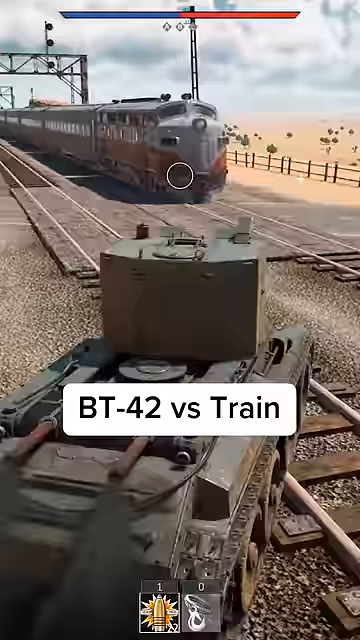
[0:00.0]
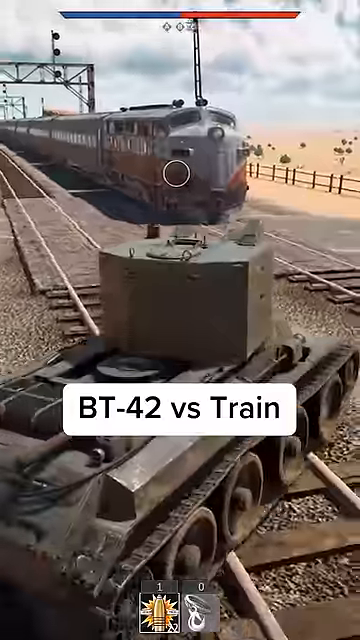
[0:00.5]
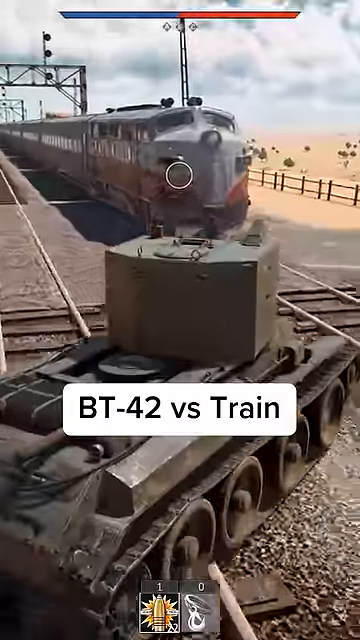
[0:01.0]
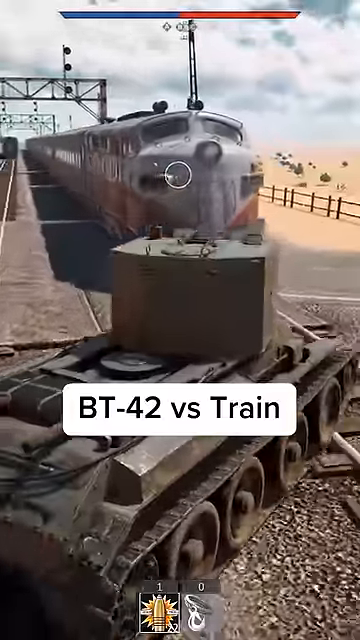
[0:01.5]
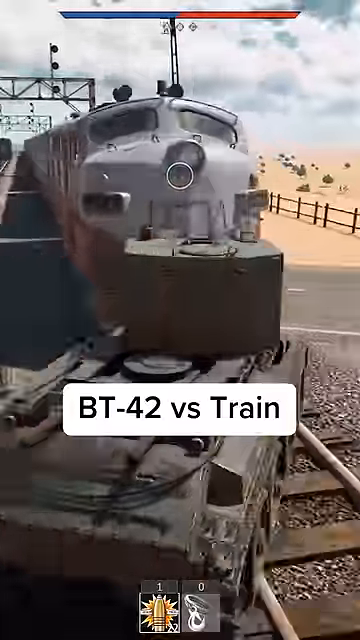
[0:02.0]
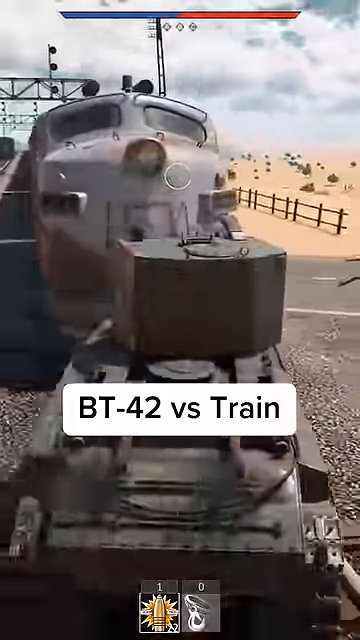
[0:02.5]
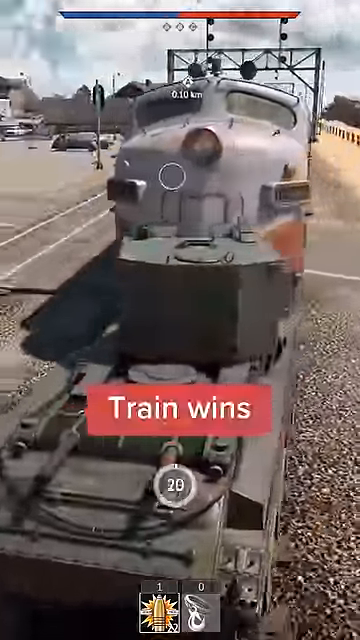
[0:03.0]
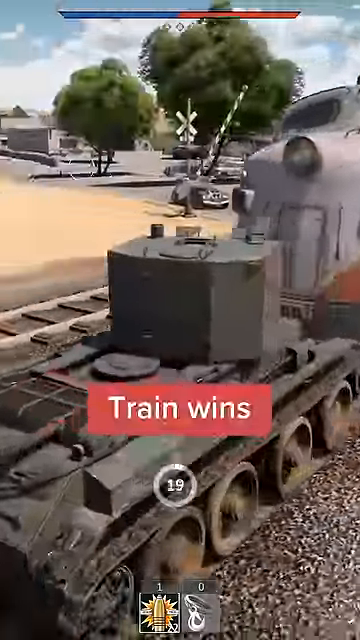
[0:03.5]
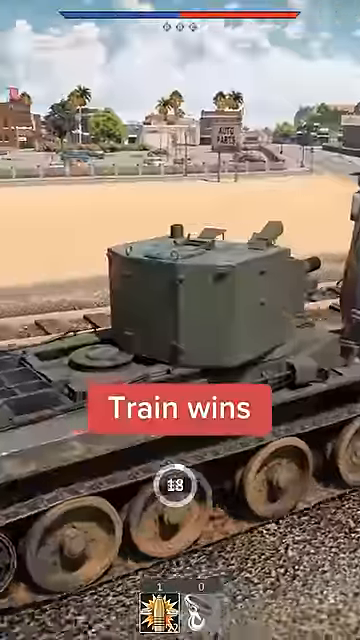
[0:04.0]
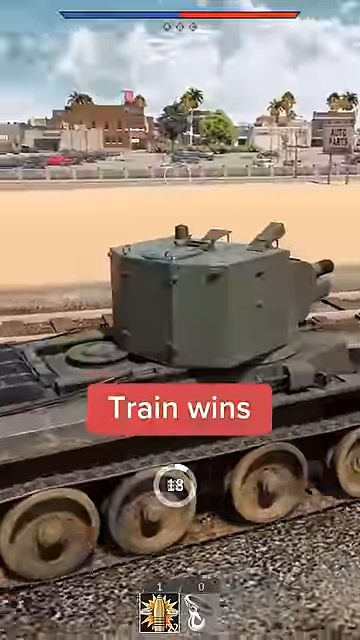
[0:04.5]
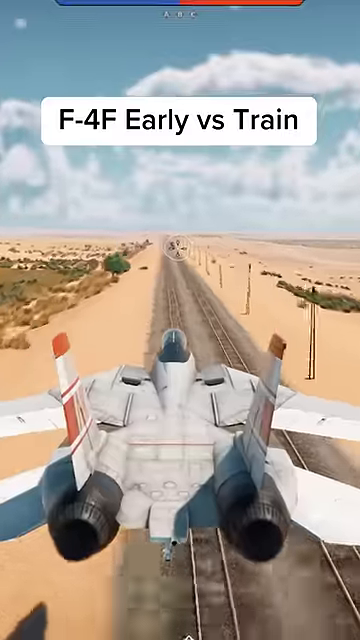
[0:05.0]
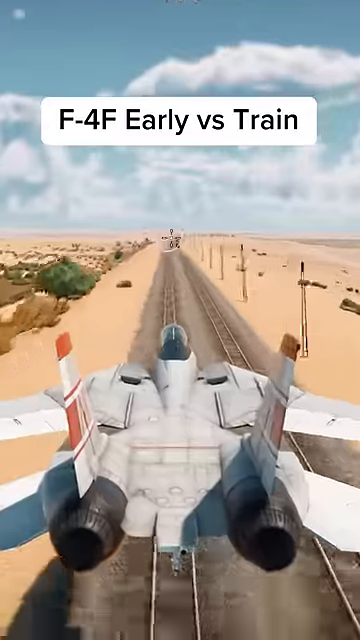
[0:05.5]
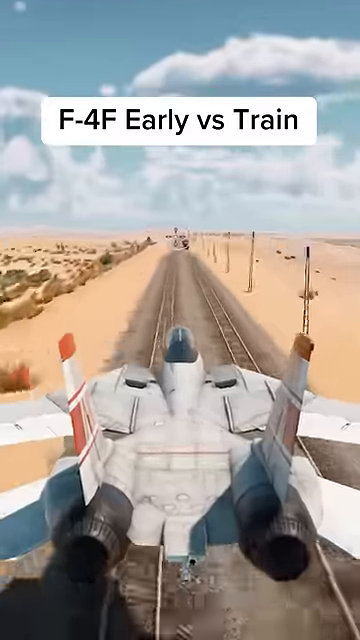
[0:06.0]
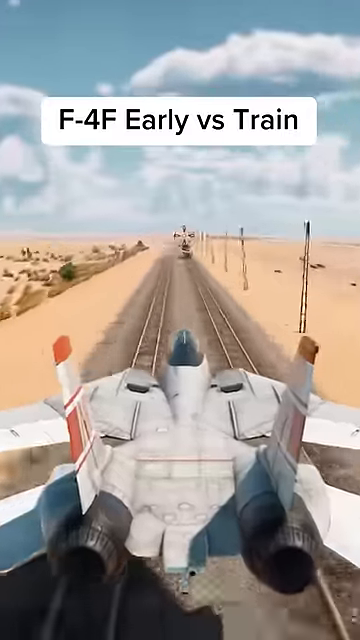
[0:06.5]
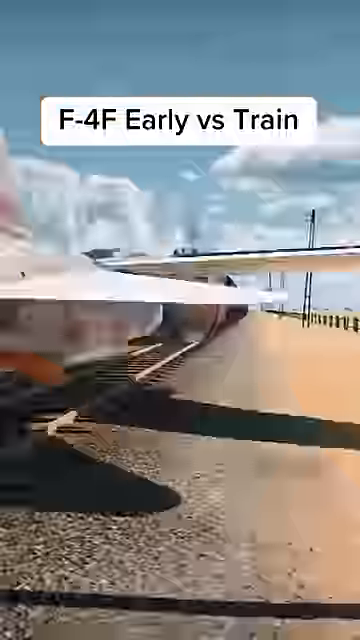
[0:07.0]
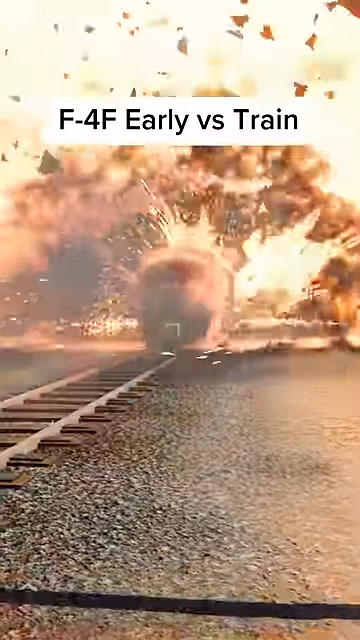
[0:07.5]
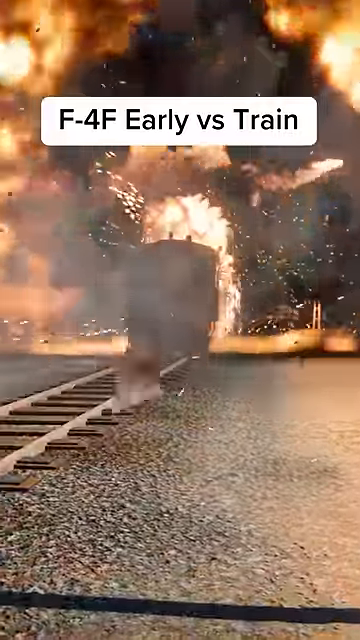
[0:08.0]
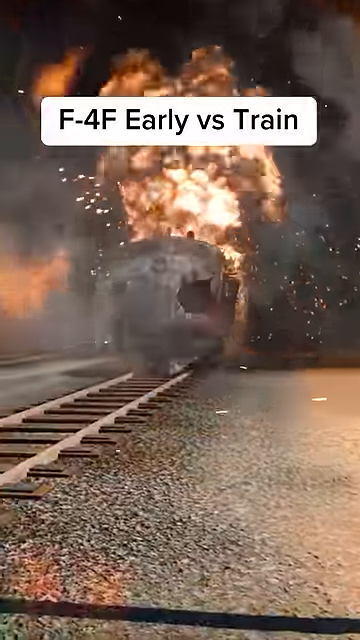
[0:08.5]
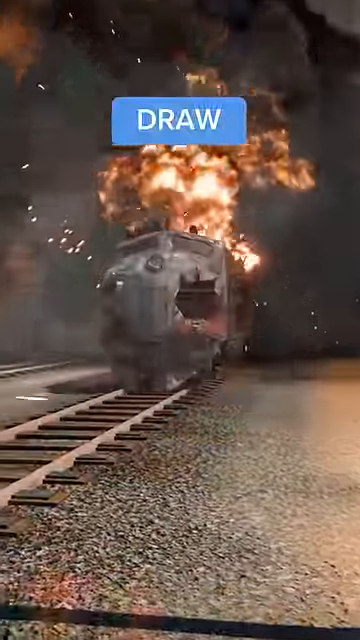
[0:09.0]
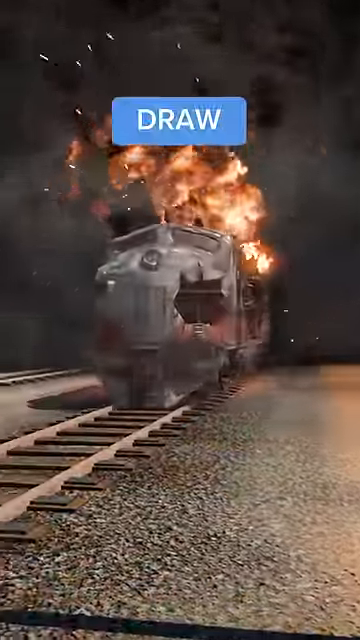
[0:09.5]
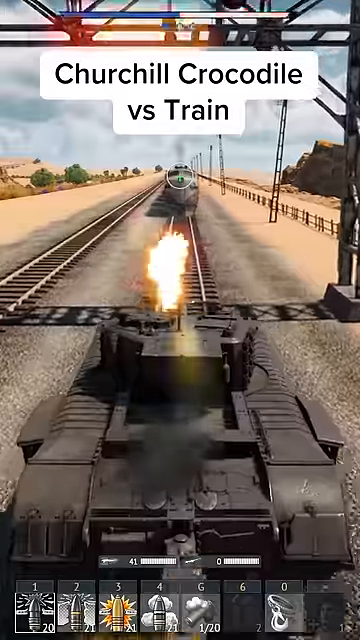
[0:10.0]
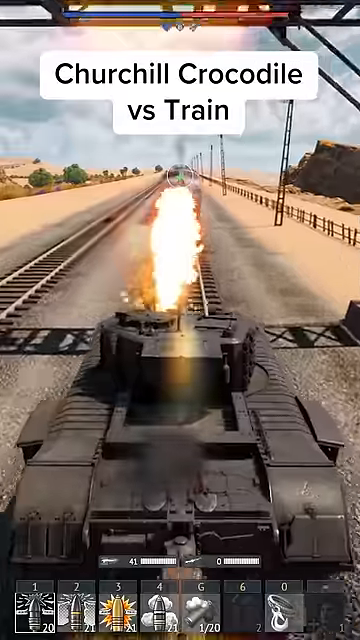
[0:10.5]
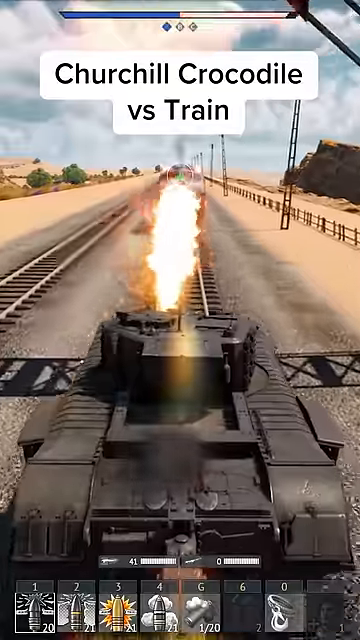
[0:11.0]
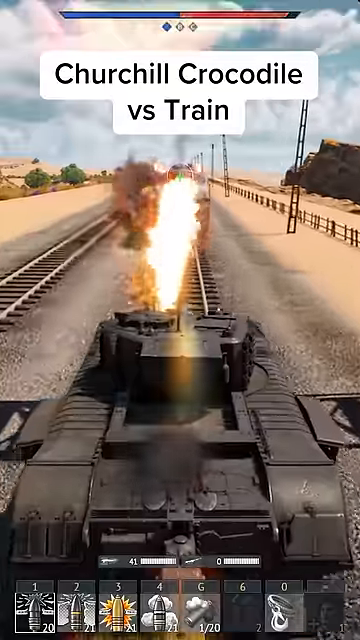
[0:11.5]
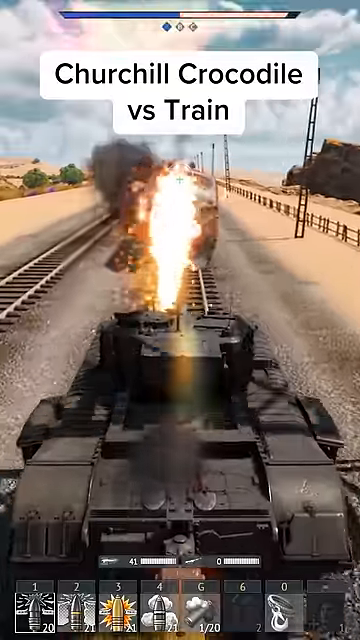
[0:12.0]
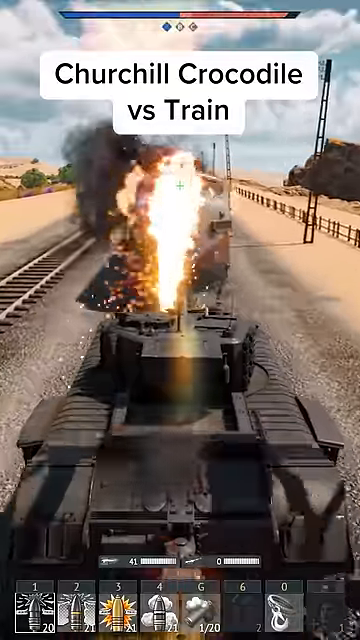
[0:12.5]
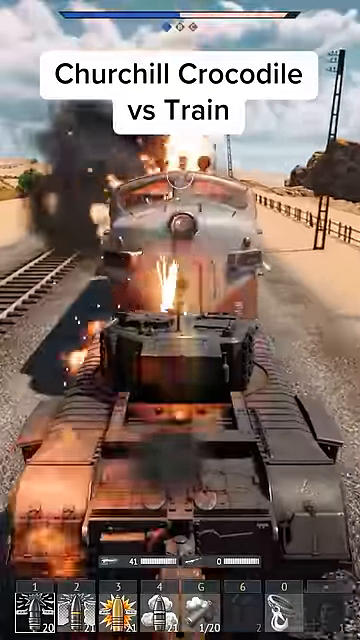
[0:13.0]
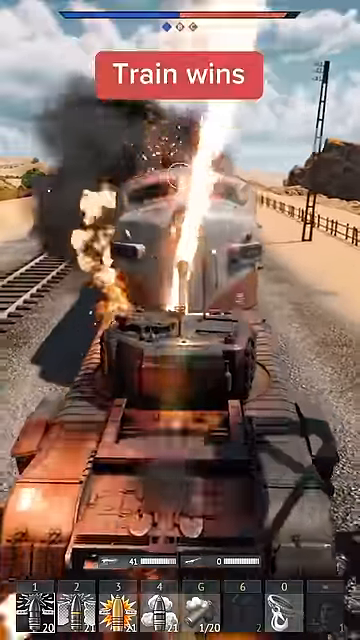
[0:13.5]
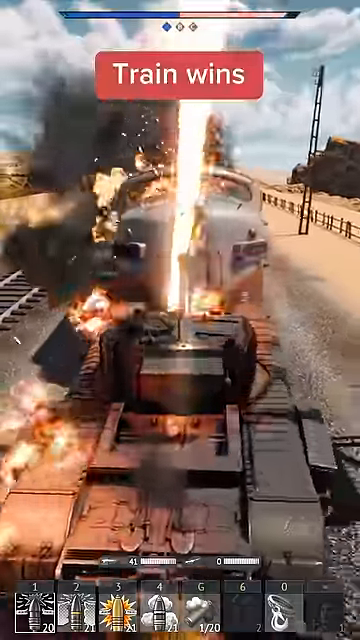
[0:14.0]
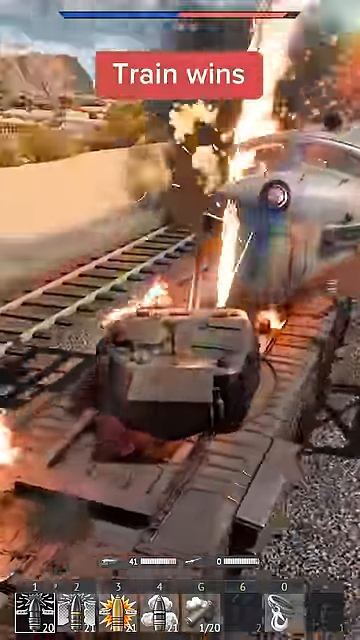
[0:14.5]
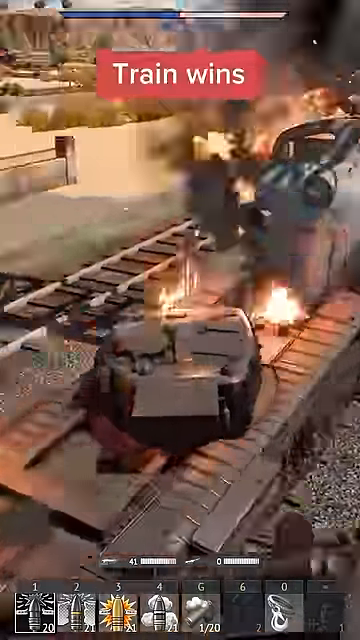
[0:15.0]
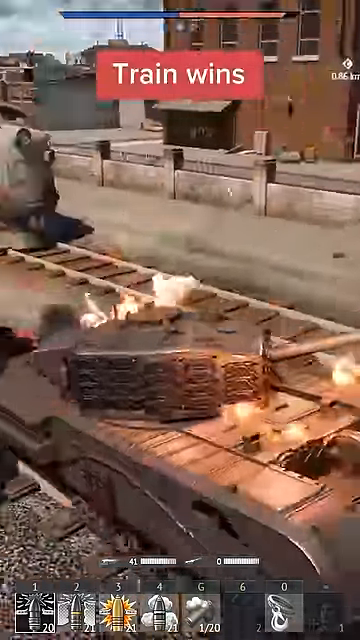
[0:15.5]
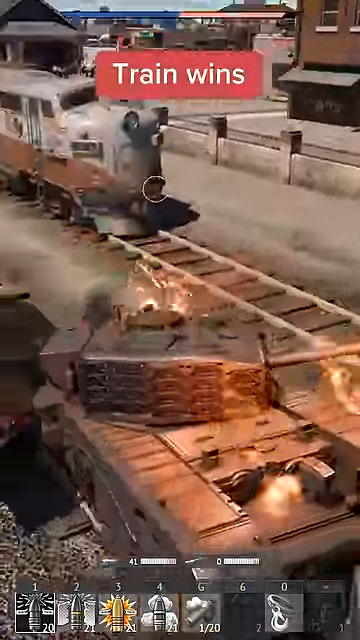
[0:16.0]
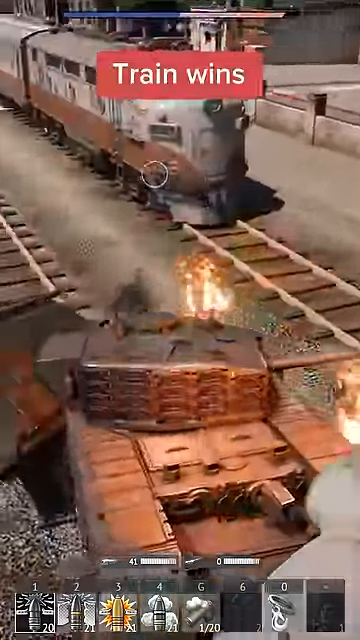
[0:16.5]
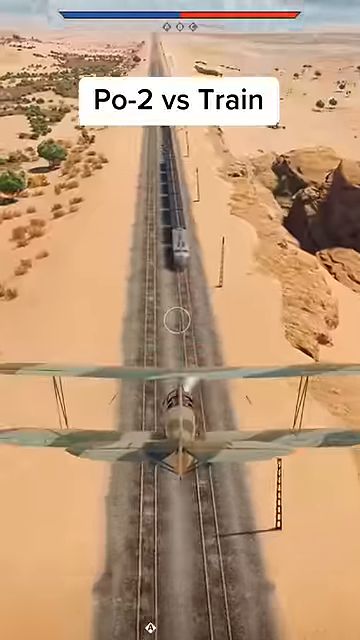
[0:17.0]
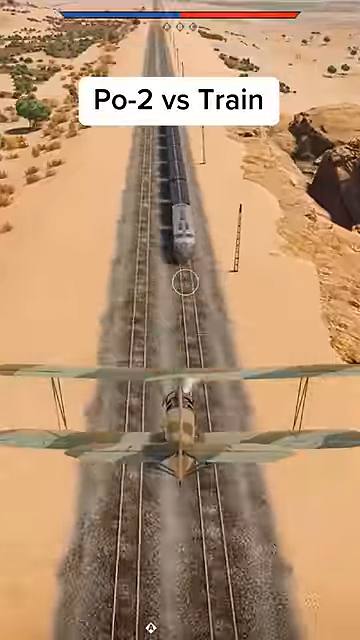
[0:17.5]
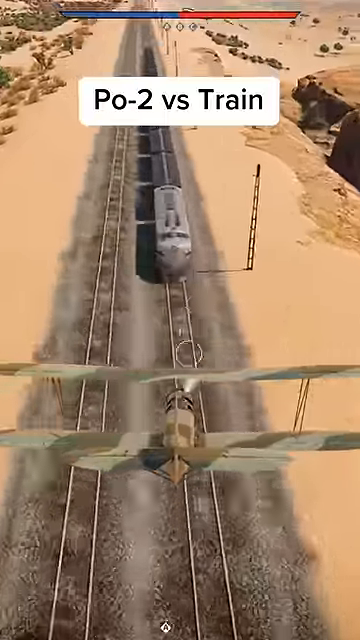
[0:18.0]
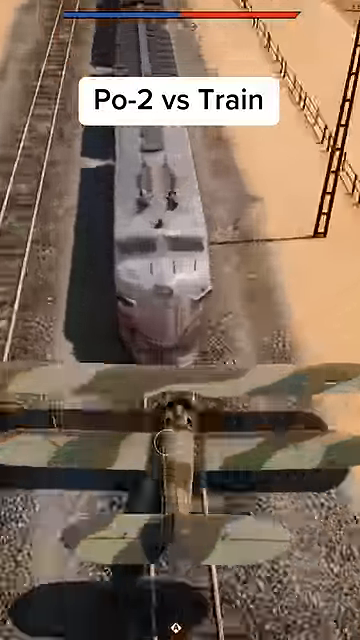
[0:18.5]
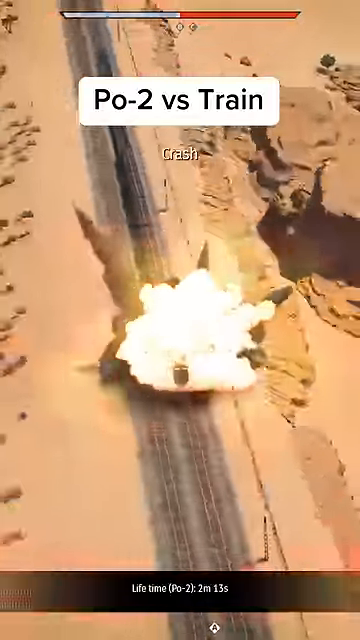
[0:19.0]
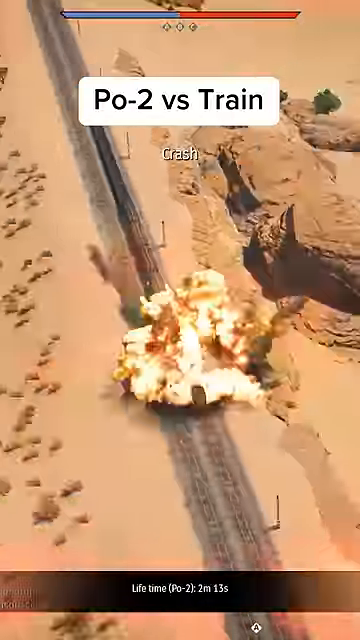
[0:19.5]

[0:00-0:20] The footage appears to be from a video game, apparently a free-for-all brawl type mobile game, in which a train moves along carrying a lot of instruments of death. There are also planes and tanks. The graphics look sort of low scale and not very well done. An F-16 drives down a railroad. A tank and a train collide, and a plane and a train collide. There seems to be a lot of chaos, destruction and explosions, with no clear winners or losers. The setting seems to be battle royale type.